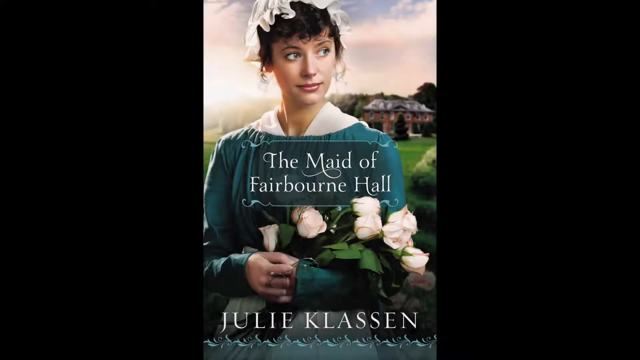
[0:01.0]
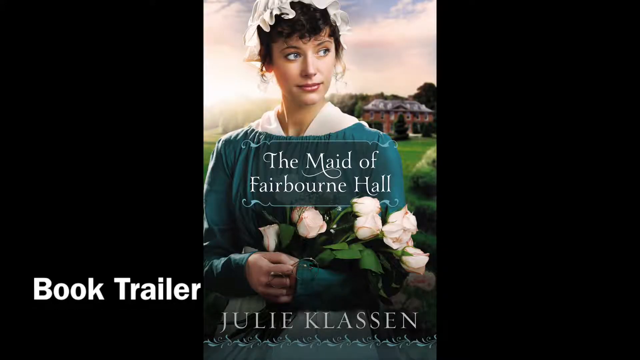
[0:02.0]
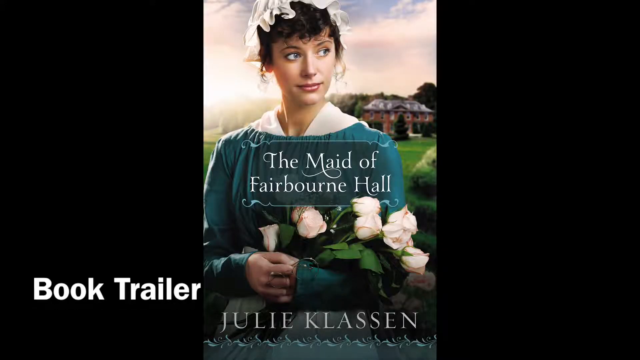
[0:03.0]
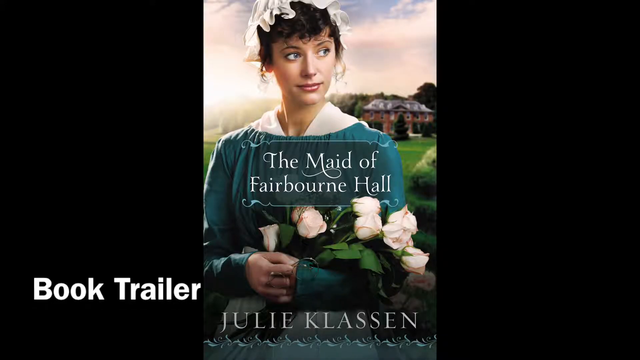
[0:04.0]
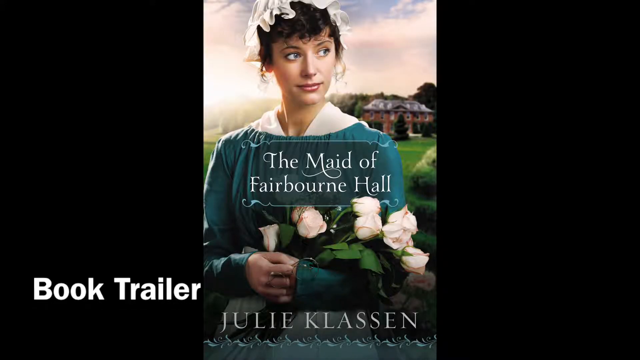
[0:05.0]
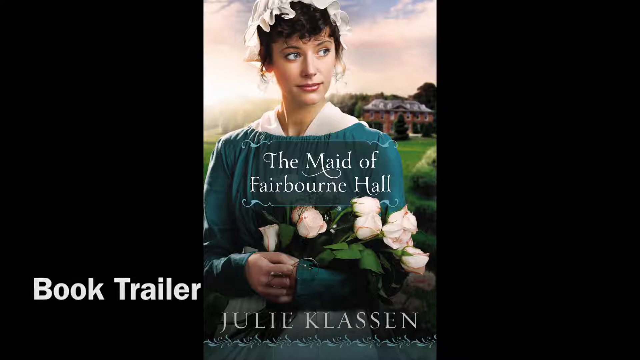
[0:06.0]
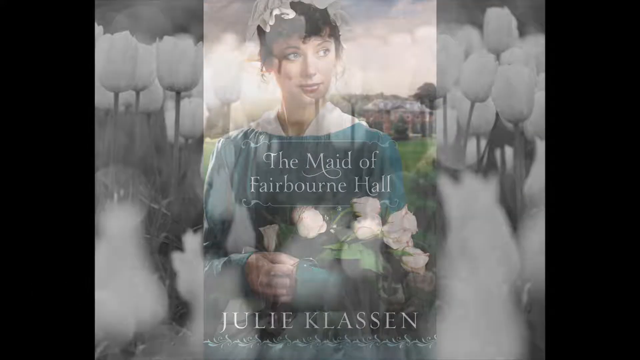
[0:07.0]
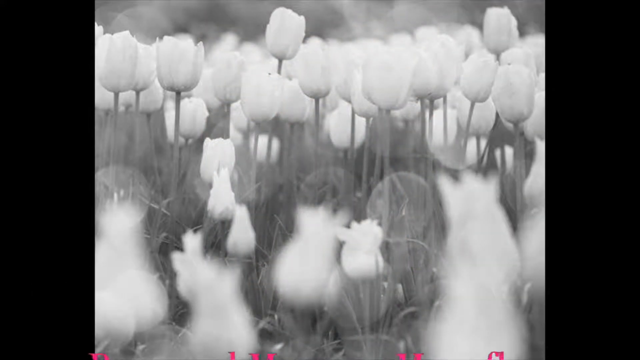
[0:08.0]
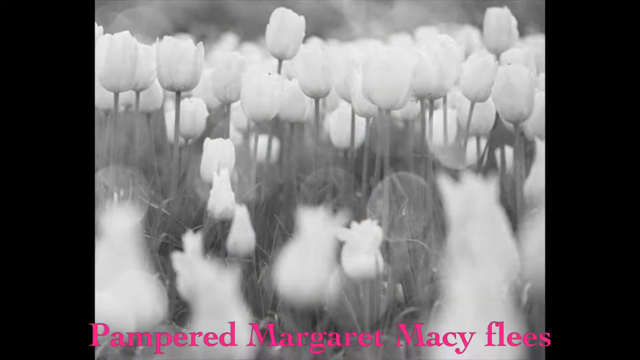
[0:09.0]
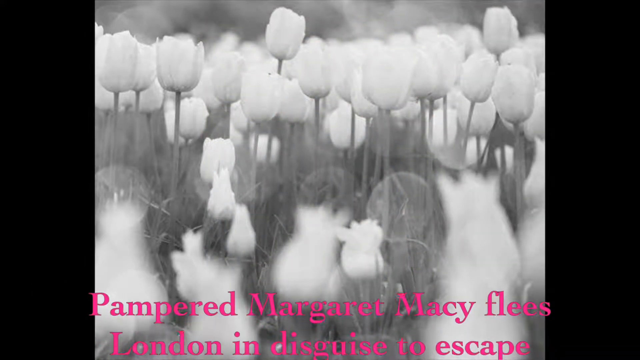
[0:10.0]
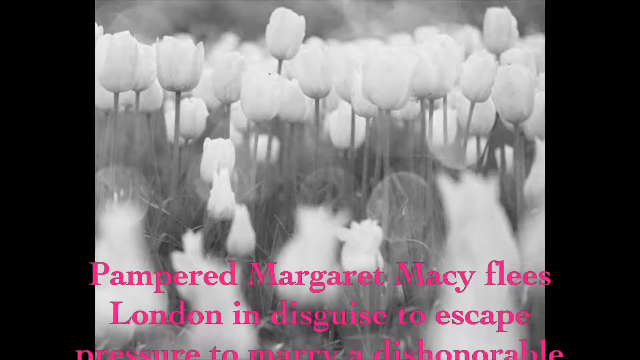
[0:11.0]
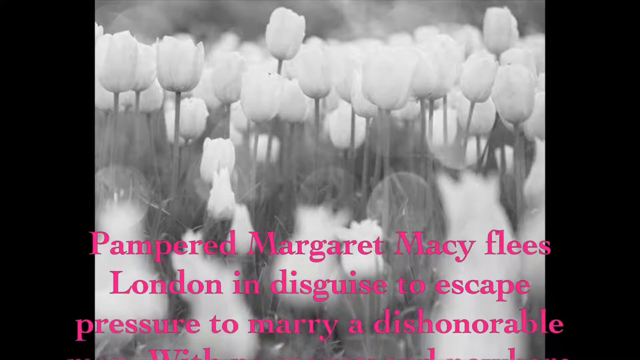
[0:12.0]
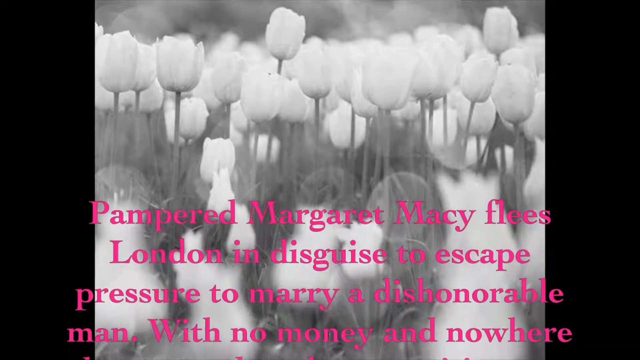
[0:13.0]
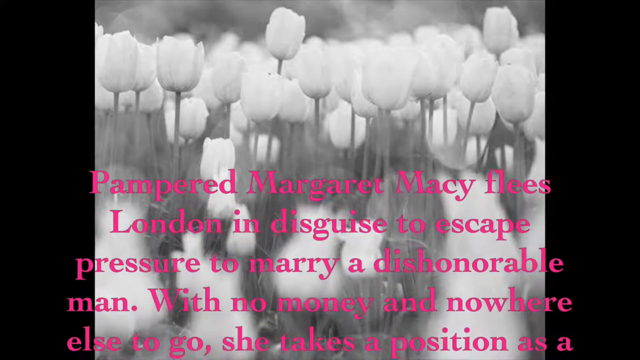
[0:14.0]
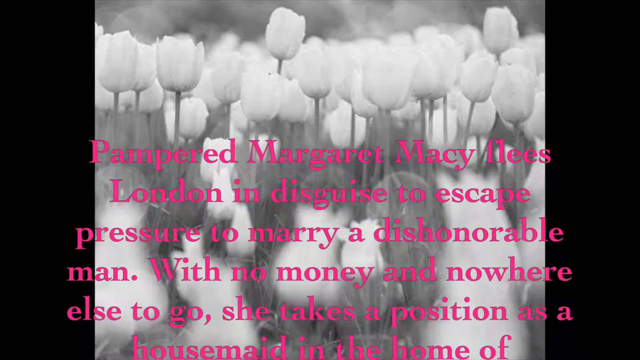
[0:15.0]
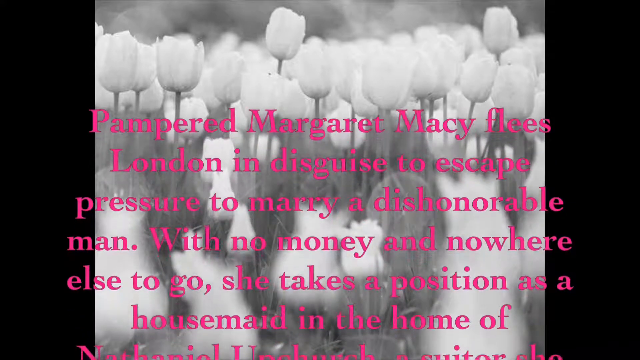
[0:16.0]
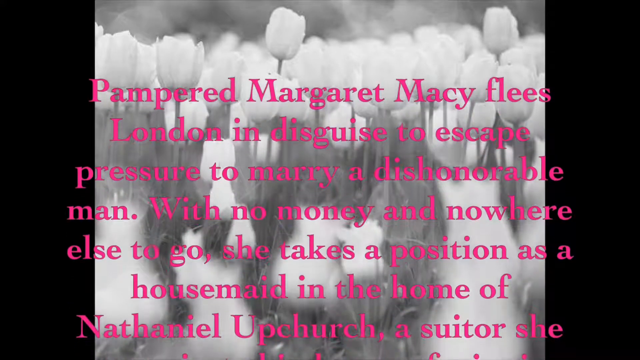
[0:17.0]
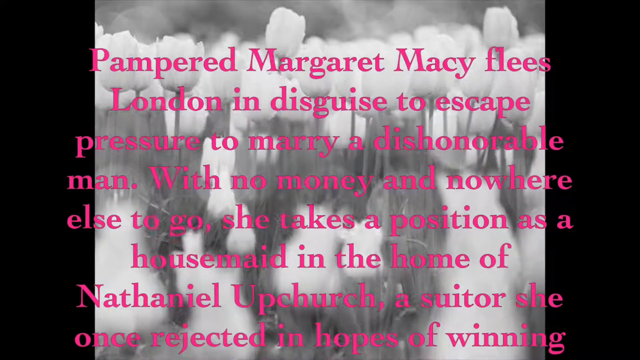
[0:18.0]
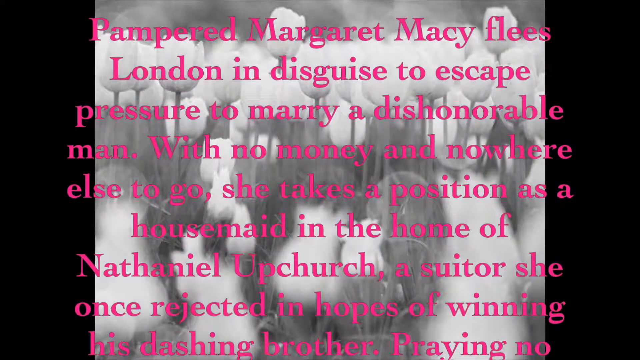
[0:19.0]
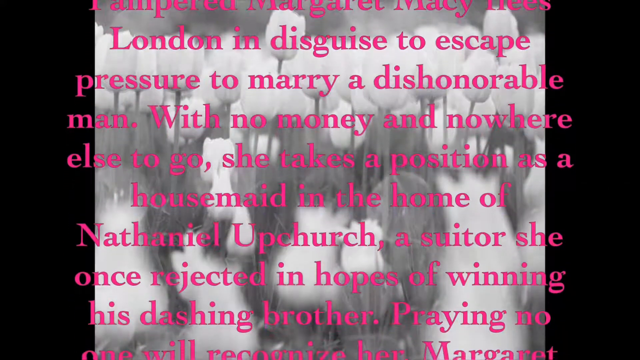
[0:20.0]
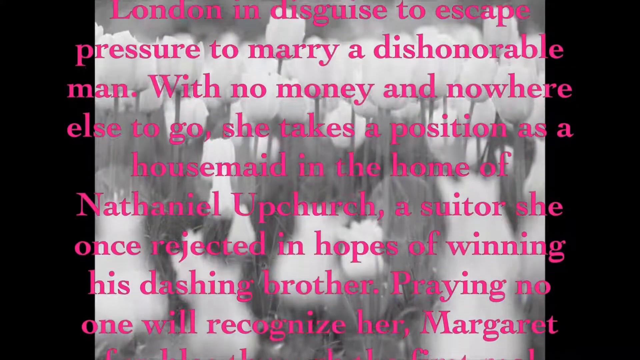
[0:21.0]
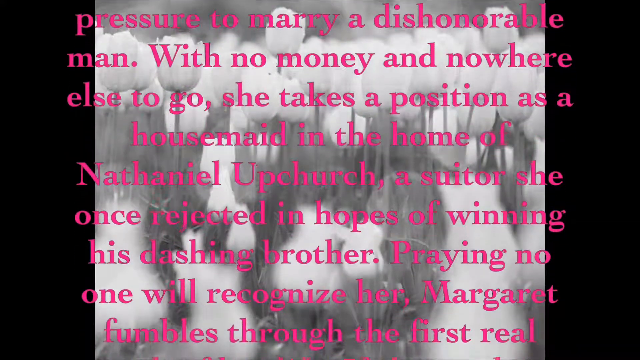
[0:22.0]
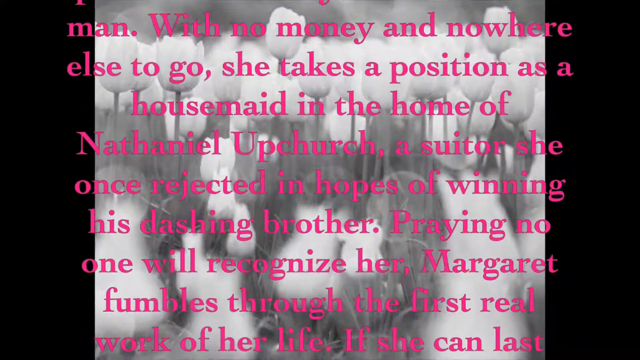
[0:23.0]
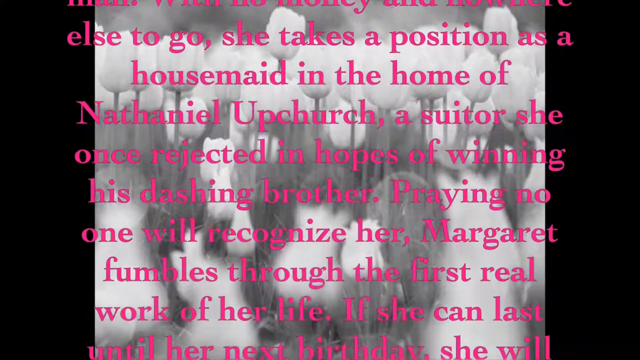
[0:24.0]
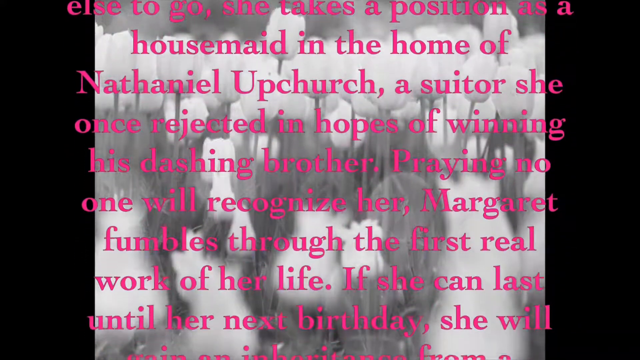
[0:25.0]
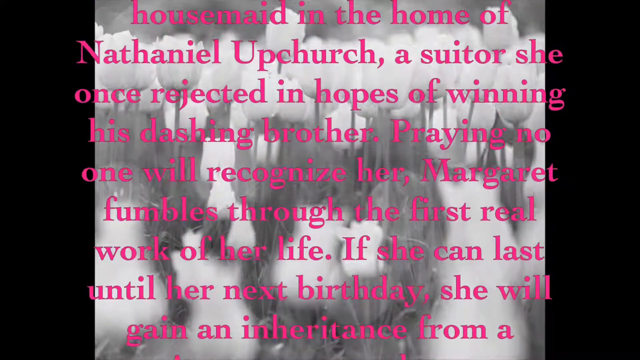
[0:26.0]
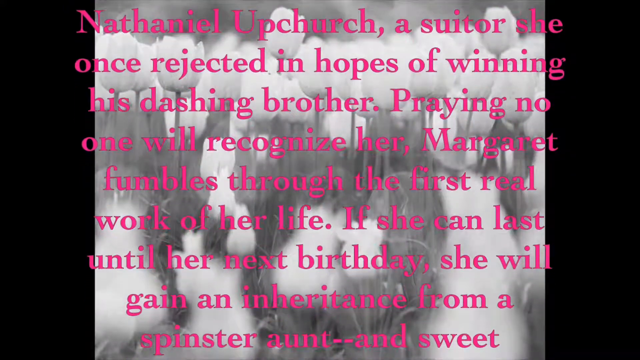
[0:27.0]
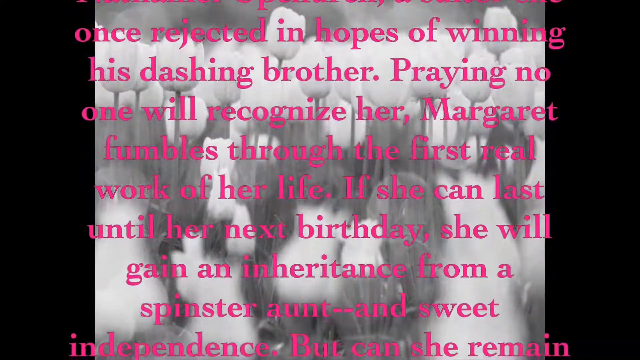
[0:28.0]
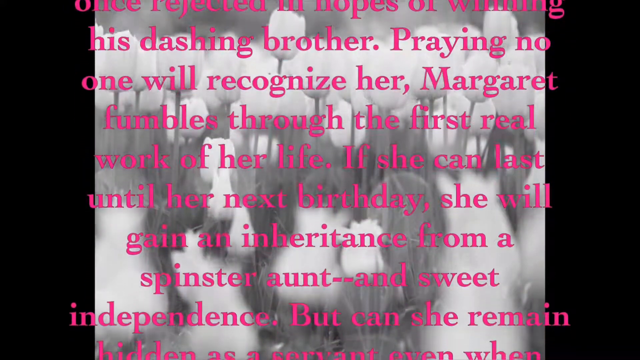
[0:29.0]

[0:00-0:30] What looks to be a book cover appears, reading "The Maid of Fairbourn Hall" and "Julia Clisson." A lady is on the cover: a white woman who looks like she may be in her mid-thirties, with a flower in her hair. The image fades to another shot, where text reads "Pampered Margaret Macy flees London in disguise to escape pressure to marry a dishonourable man. With no mercy and nowhere else to go, she takes a position as a housemaid in the home of Nathaniel Upchurch, a suitor she once rejected in hopes of winning his dashing brother. Praying no one will recognize her, Margaret fumbles through the first real work of her life. If she can last until her next birthday." The text continues a little further and then abruptly stops. The words start from the bottom of the screen and proceed to the top, showing only the description.